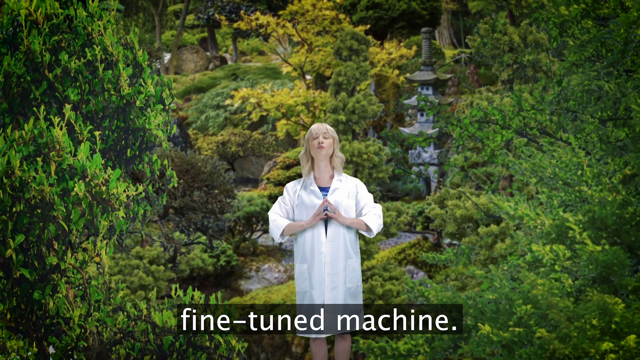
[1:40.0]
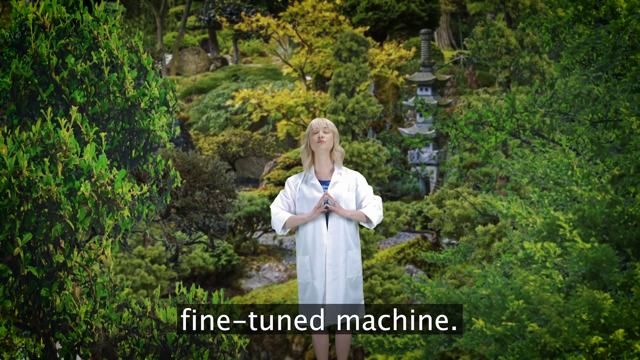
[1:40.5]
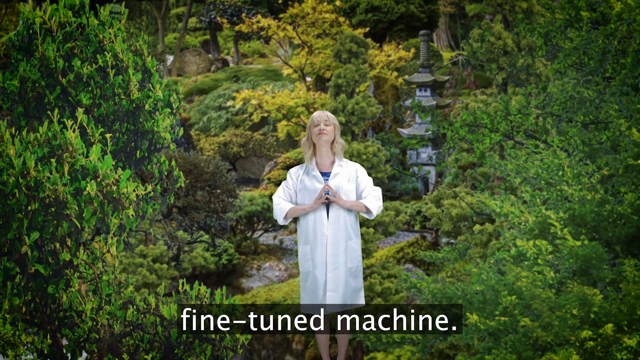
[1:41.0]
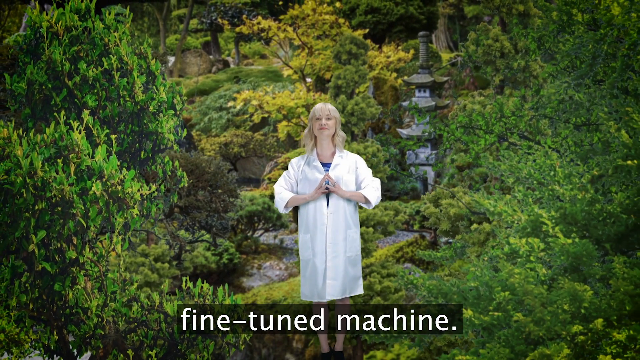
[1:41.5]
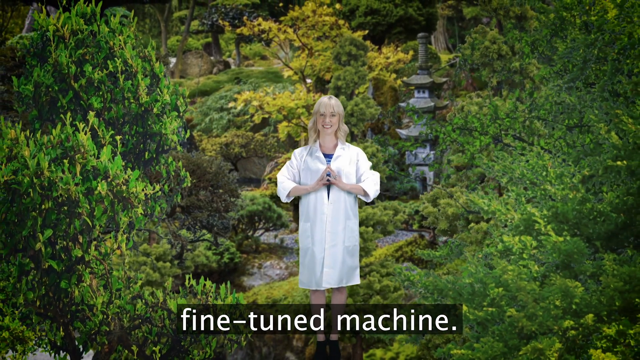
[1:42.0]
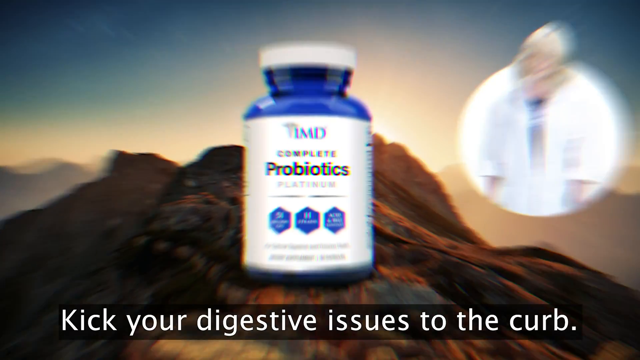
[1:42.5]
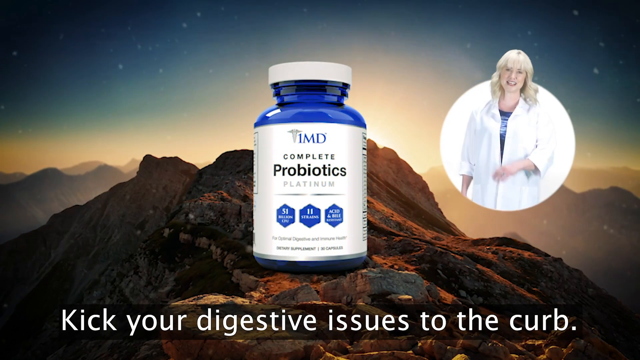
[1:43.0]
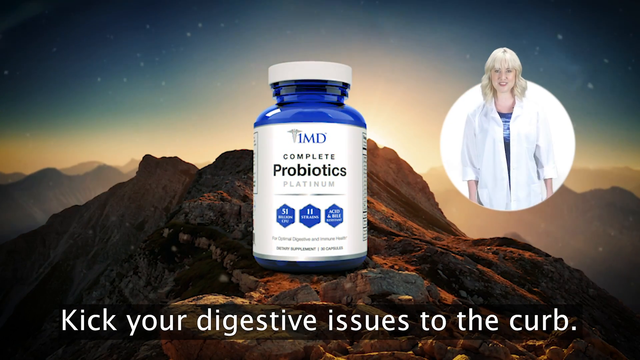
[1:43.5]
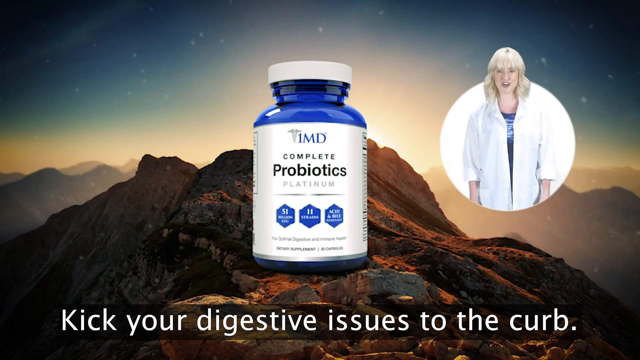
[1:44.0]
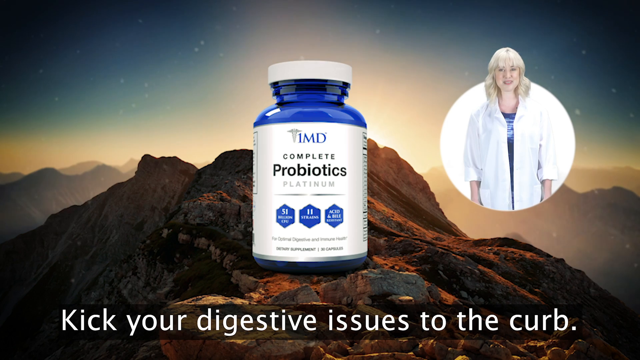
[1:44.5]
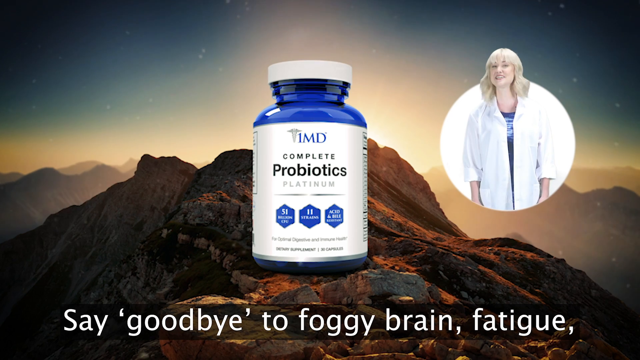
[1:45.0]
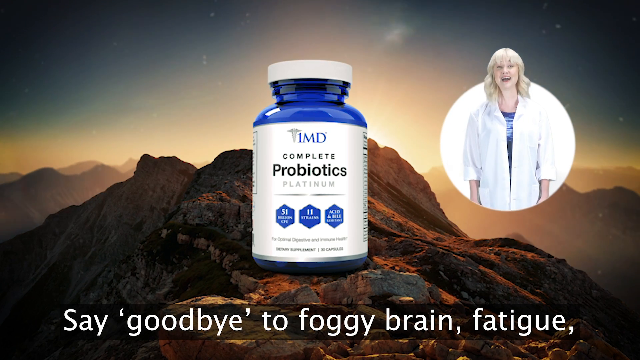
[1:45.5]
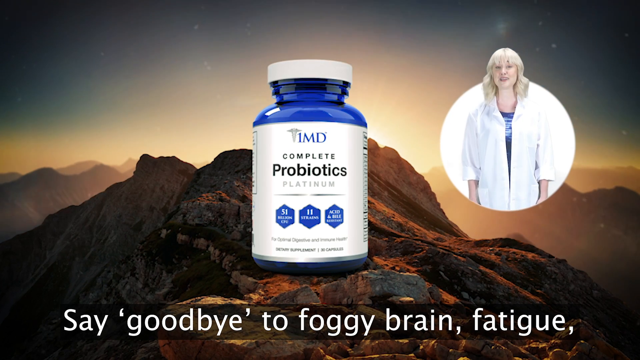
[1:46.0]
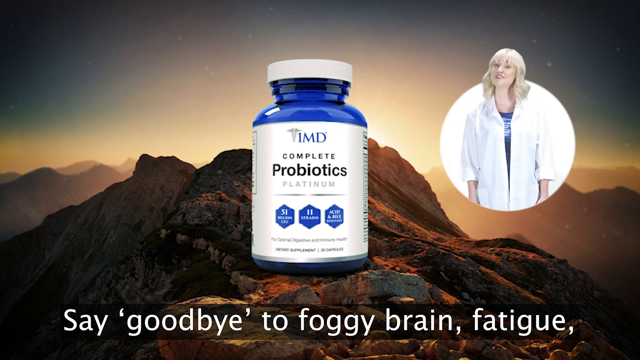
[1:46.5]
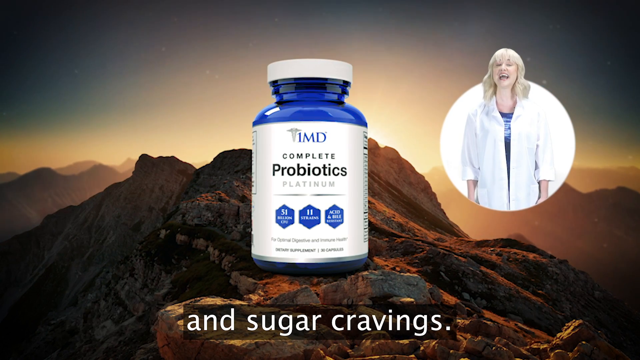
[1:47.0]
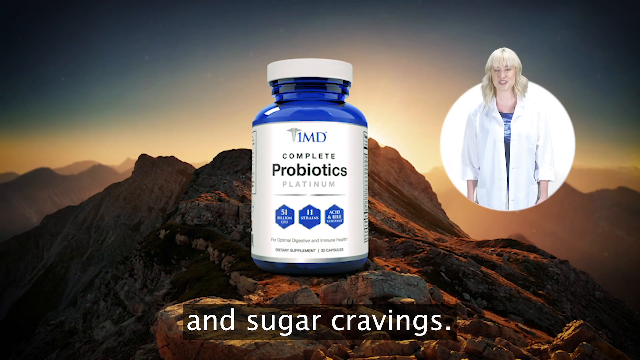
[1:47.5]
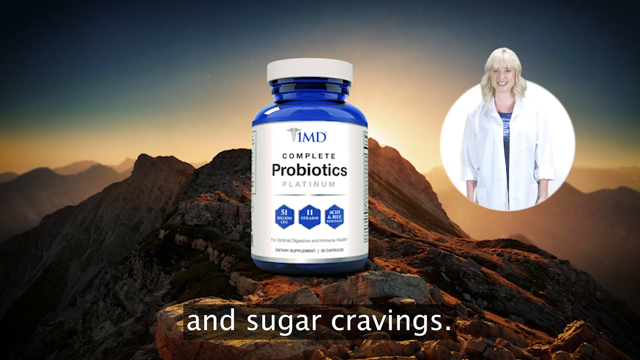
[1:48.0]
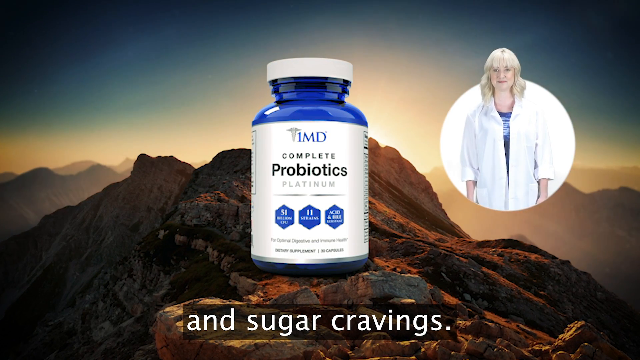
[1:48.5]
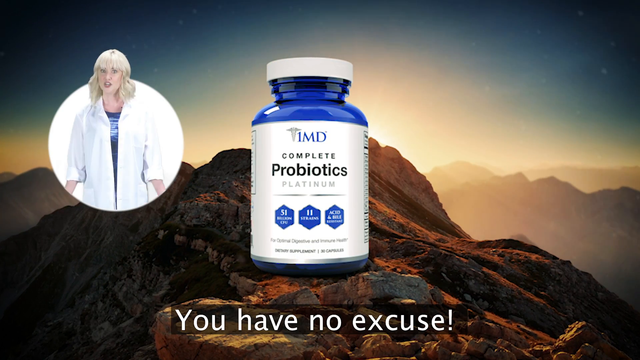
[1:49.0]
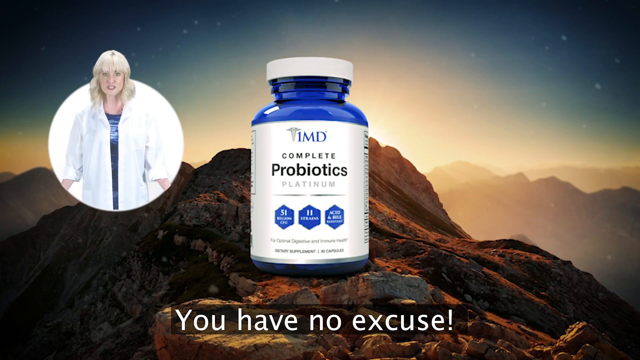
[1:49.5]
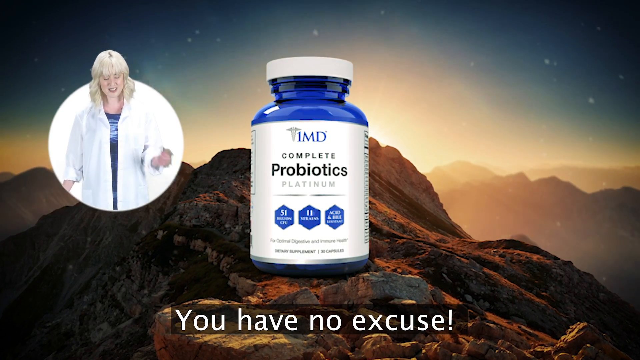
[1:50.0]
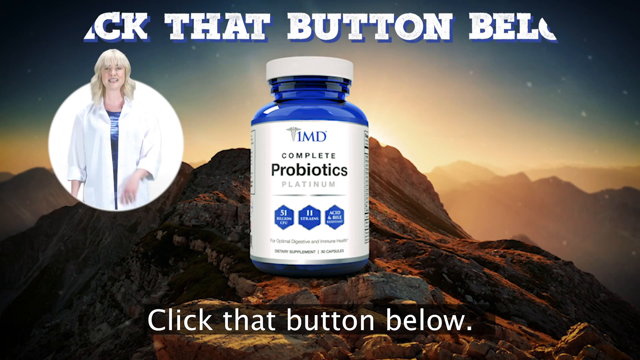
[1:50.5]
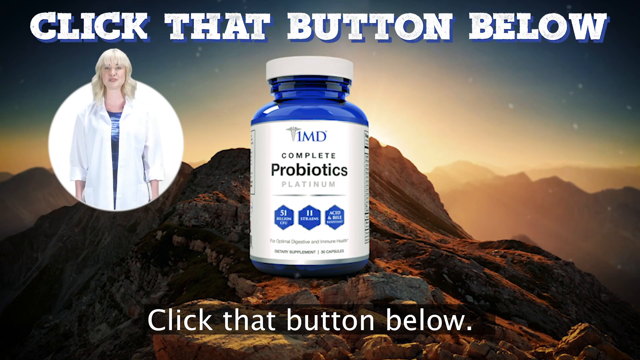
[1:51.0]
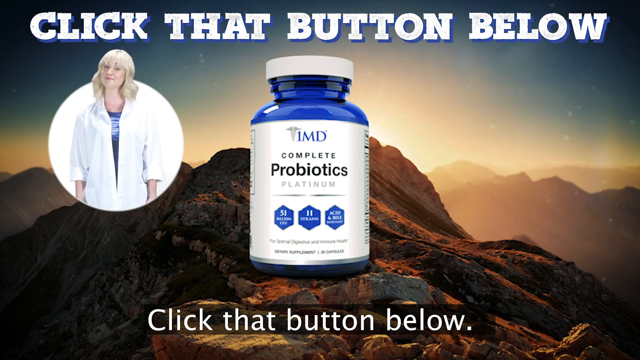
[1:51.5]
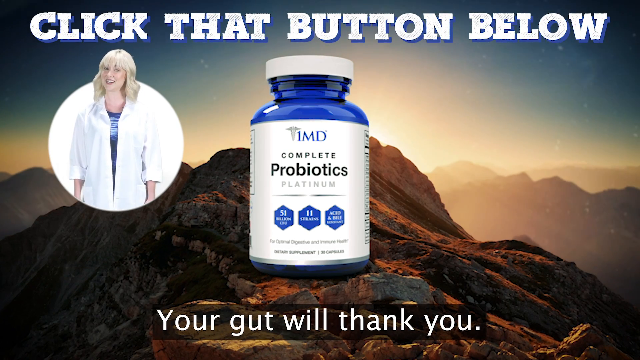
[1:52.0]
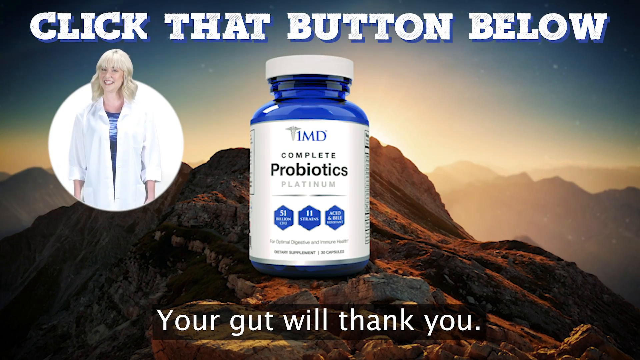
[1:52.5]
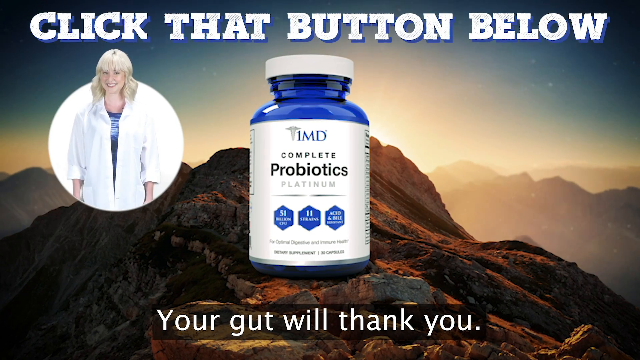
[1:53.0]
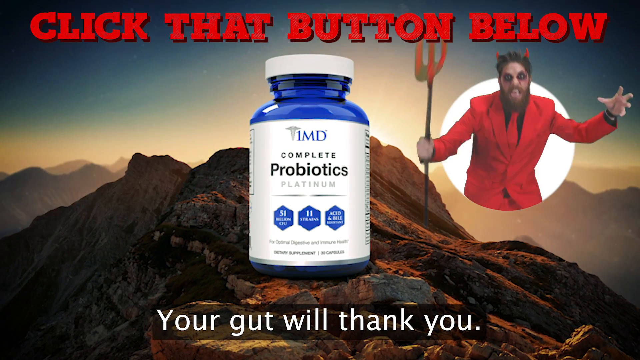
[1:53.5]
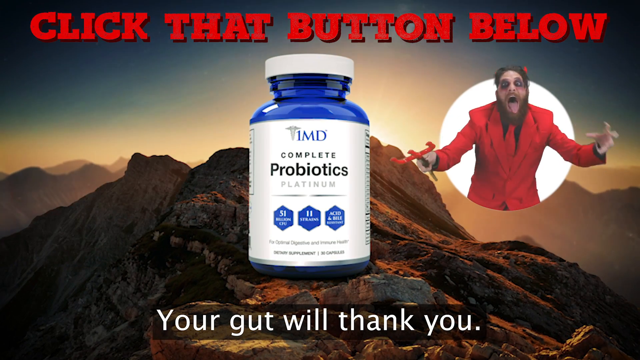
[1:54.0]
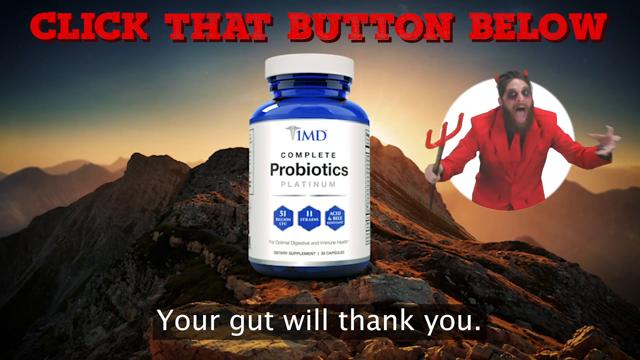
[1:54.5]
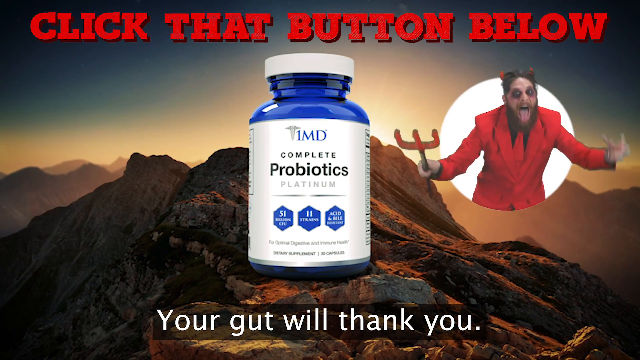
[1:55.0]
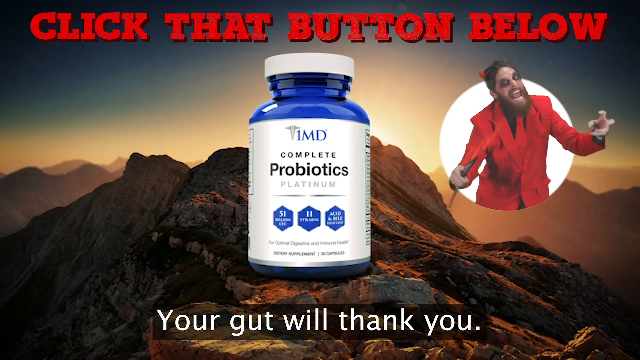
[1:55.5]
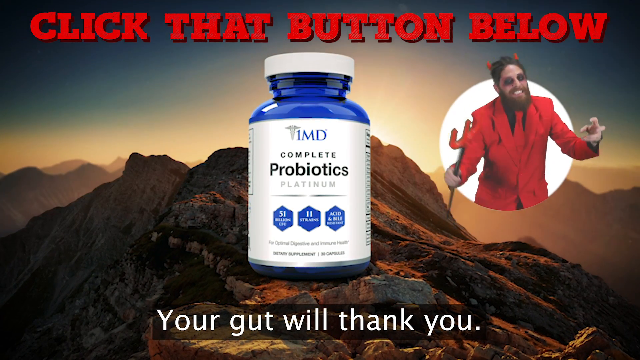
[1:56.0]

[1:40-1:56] The blonde woman in the lab coat stands outside in front of a lush green background at a Buddha temple, smiling with her hands clasped in front of her chest. The scene changes to a blue bottle with a white label reading "complete probiotics" in front of a mountain range, with the same woman in a picture-in-picture on the right-hand side. She then moves to the left of the screen in the same picture-in-picture fashion, while text reads "click that button below" and the blue bottle remains enlarged in front of the mountain range. The woman, with blonde hair and a blue shirt, keeps smiling in the picture-in-picture on the left side of the screen. The devil in a red suit and horns, holding a trident, then flashes on the right-hand side of the screen.